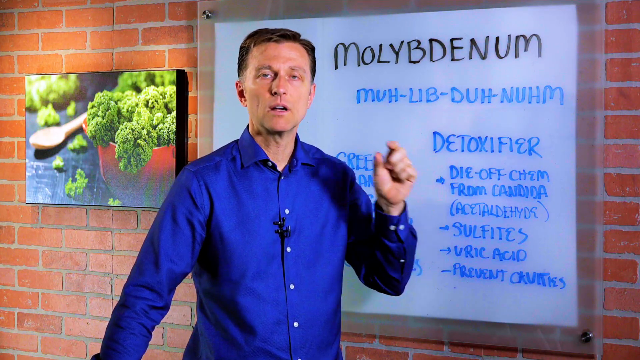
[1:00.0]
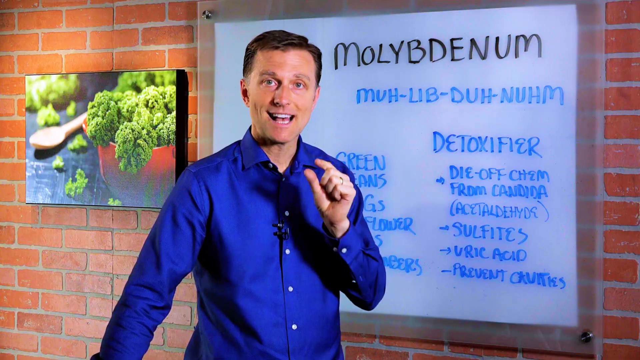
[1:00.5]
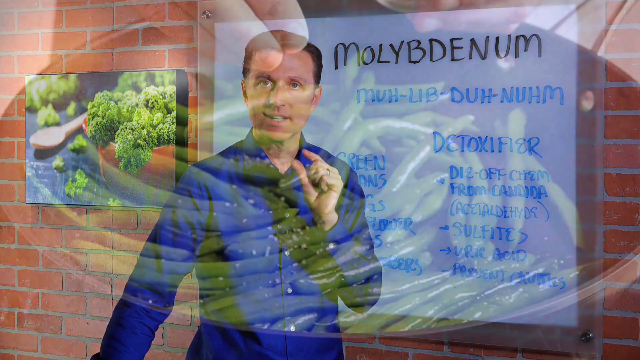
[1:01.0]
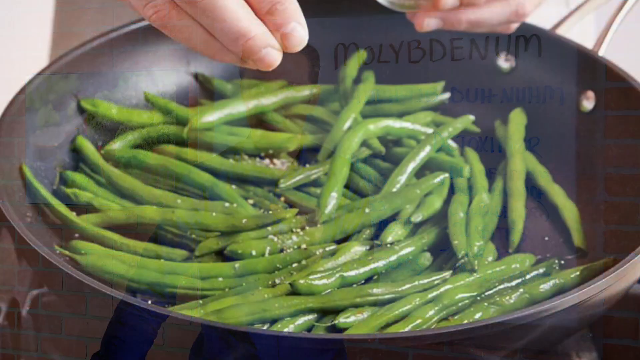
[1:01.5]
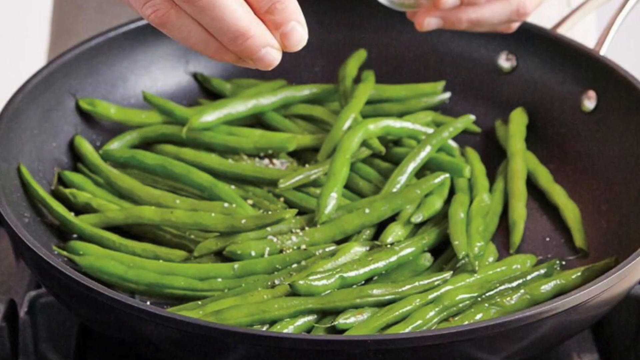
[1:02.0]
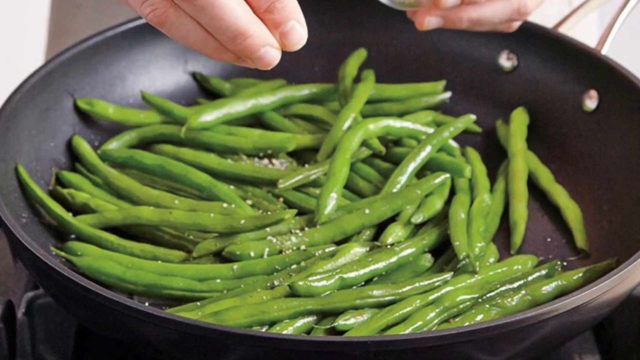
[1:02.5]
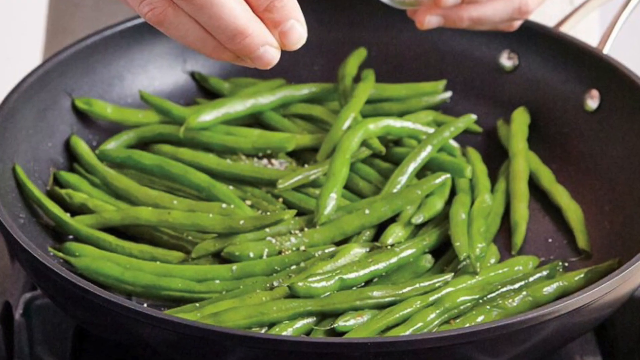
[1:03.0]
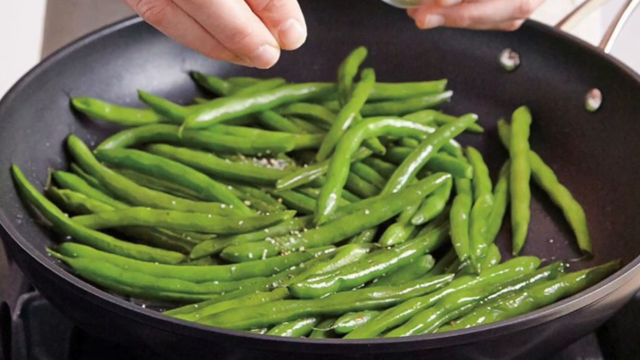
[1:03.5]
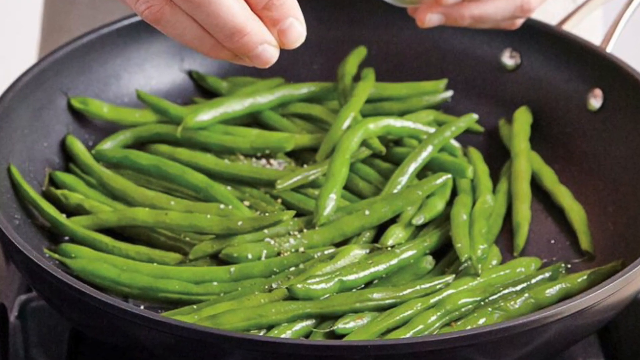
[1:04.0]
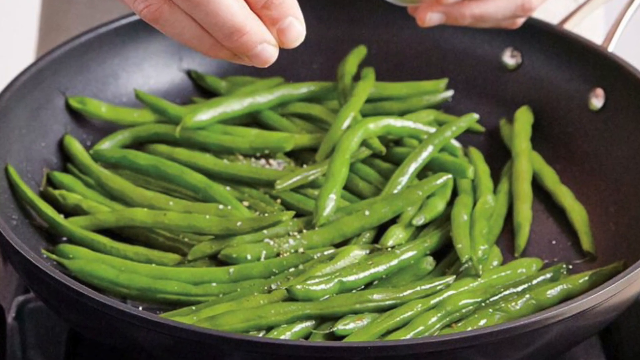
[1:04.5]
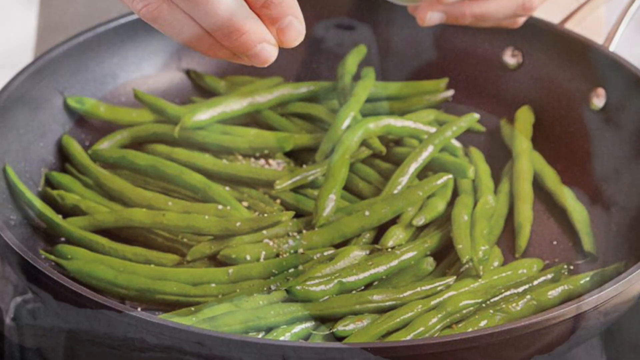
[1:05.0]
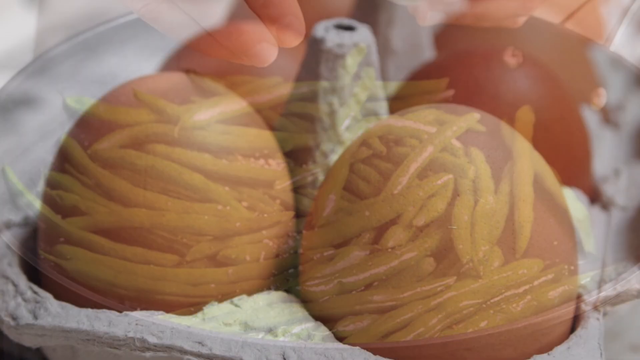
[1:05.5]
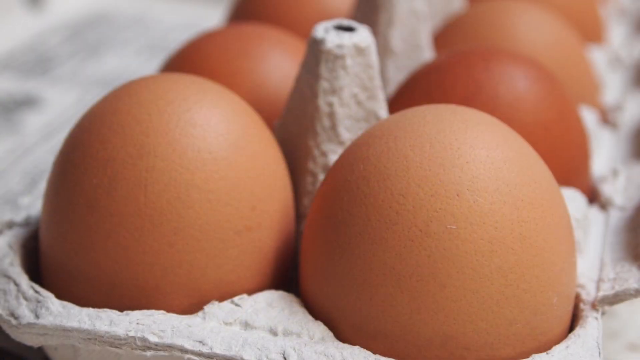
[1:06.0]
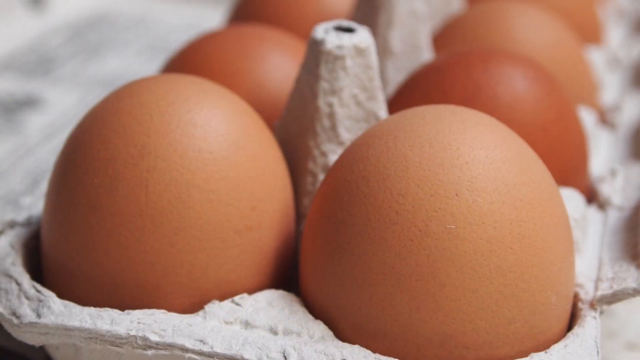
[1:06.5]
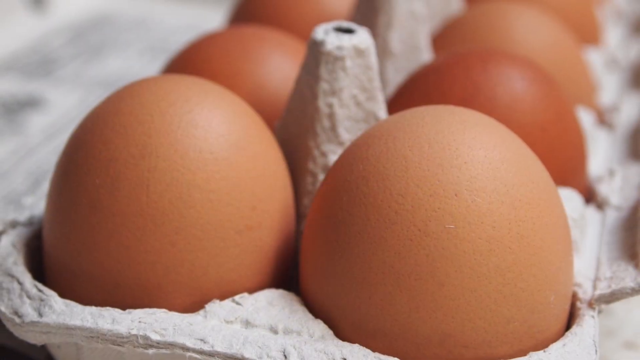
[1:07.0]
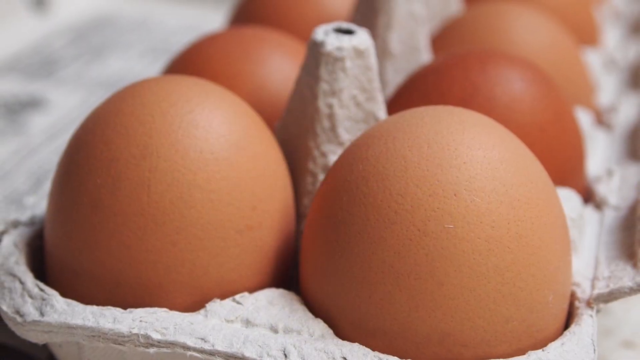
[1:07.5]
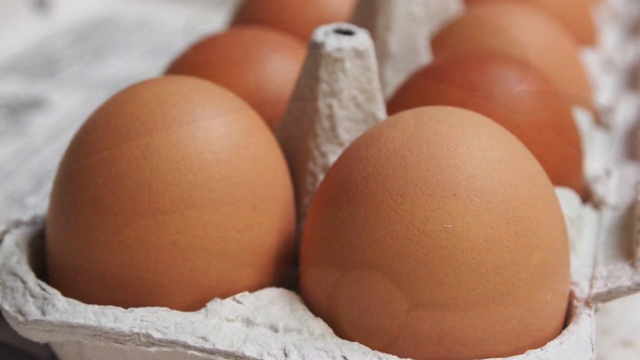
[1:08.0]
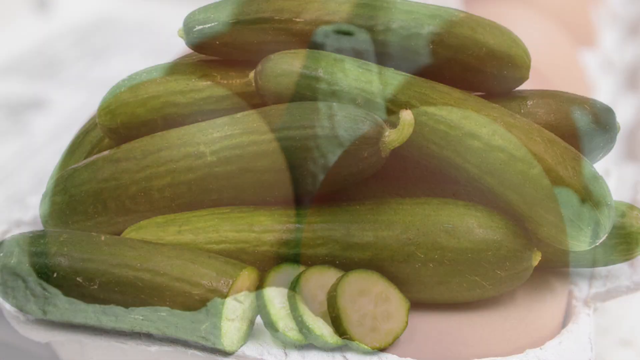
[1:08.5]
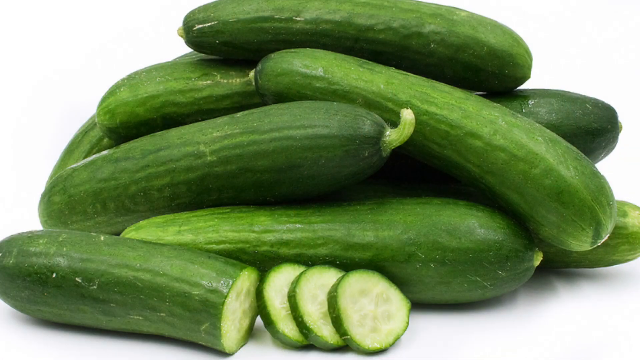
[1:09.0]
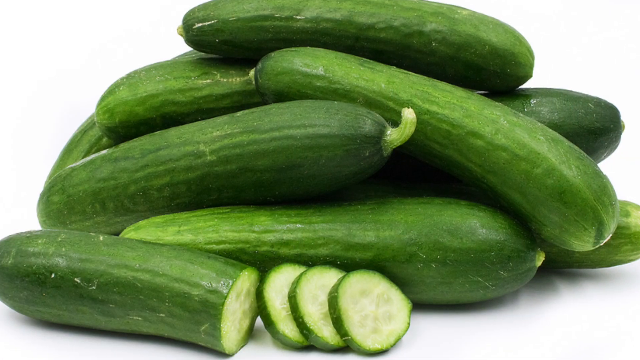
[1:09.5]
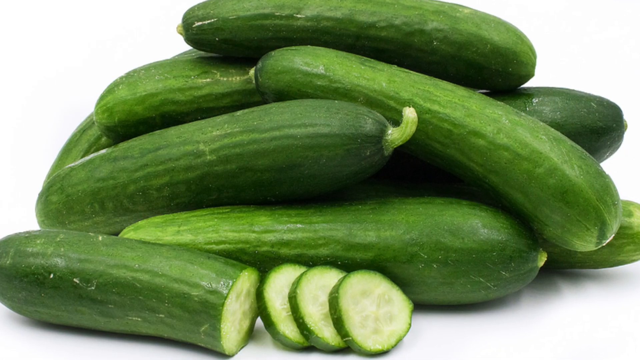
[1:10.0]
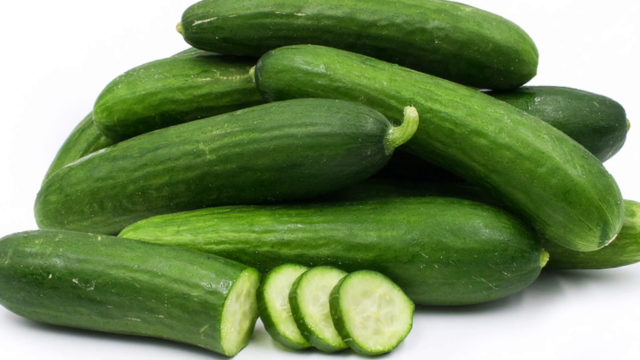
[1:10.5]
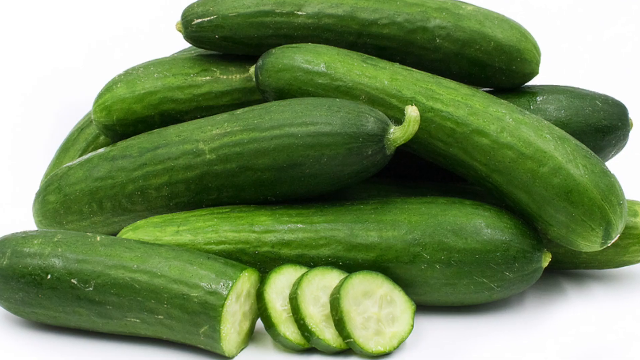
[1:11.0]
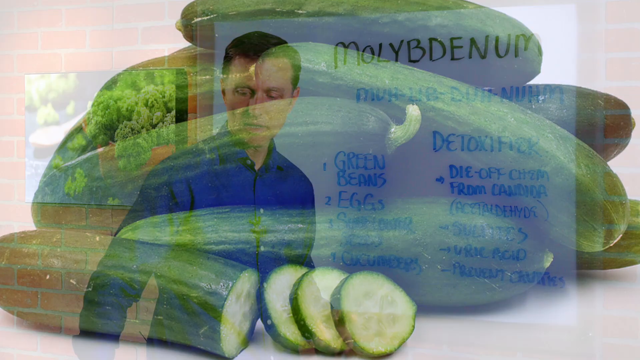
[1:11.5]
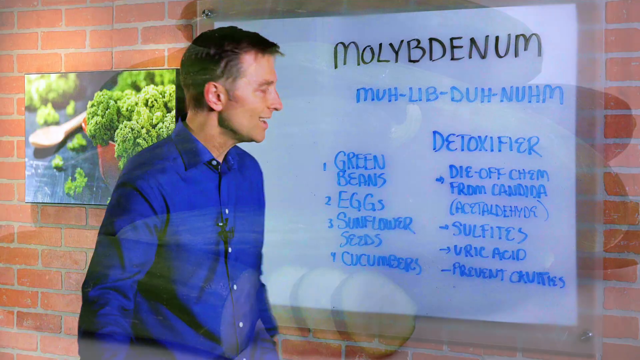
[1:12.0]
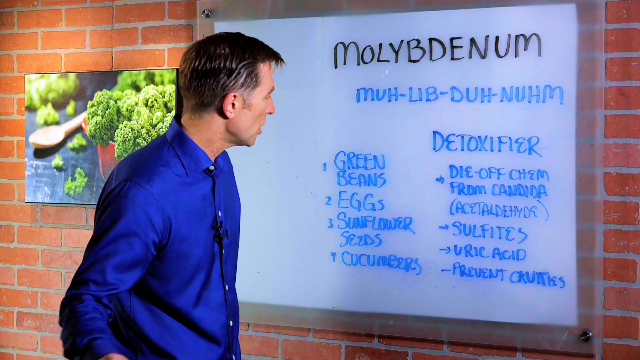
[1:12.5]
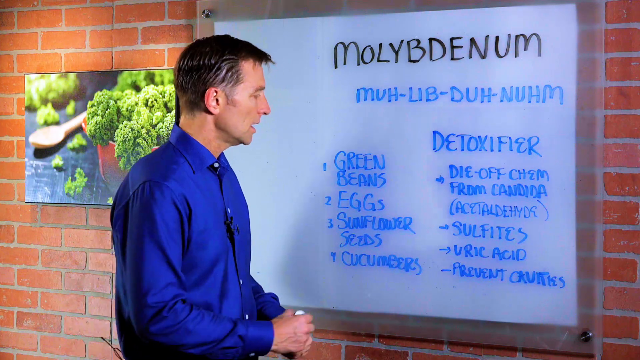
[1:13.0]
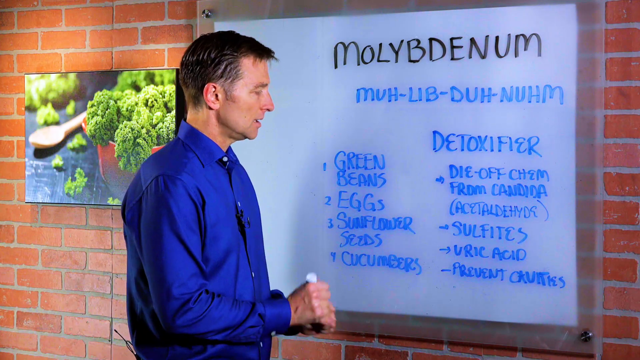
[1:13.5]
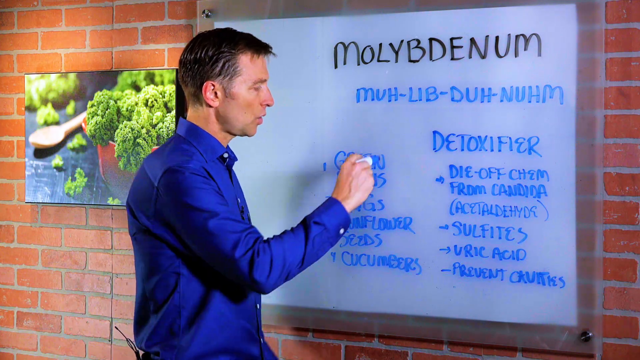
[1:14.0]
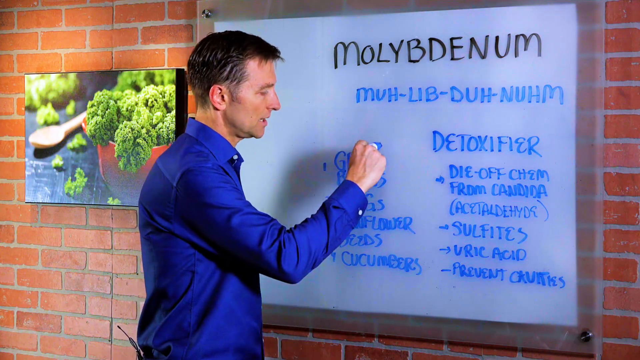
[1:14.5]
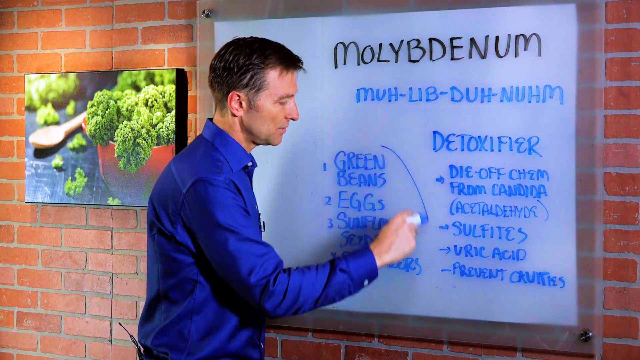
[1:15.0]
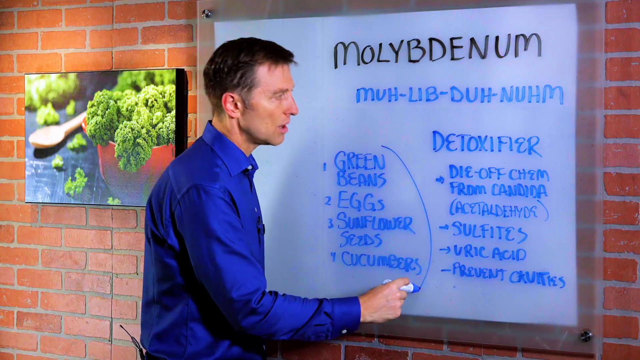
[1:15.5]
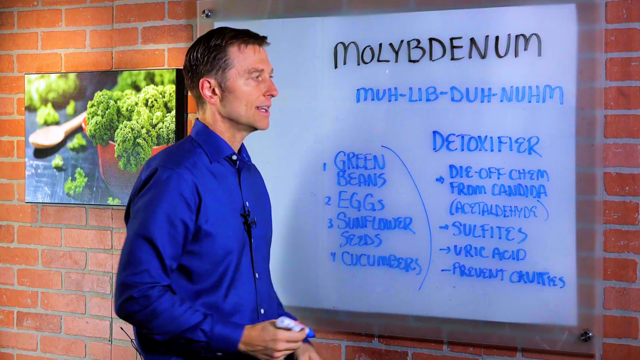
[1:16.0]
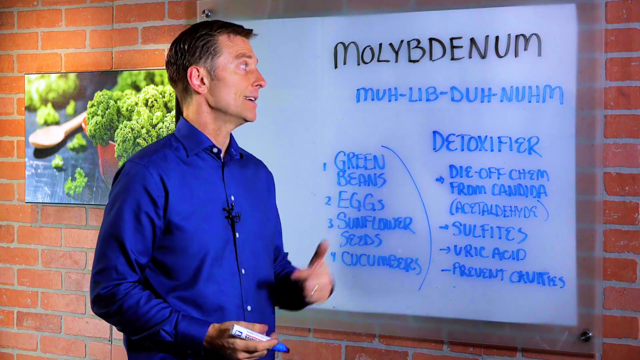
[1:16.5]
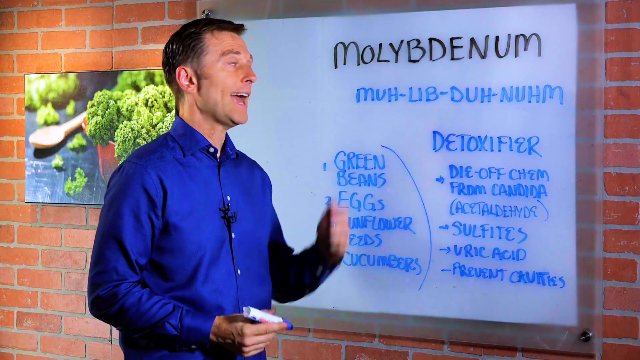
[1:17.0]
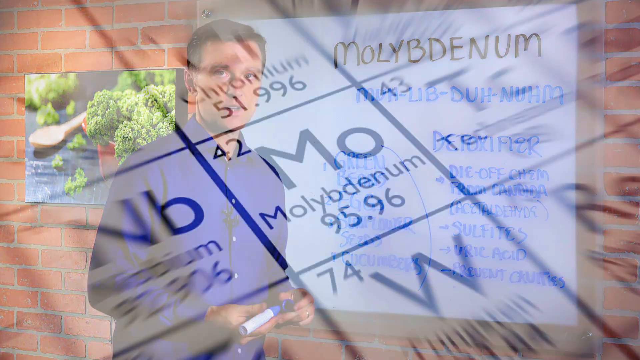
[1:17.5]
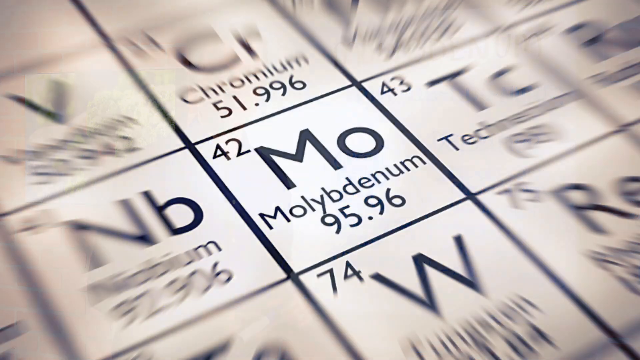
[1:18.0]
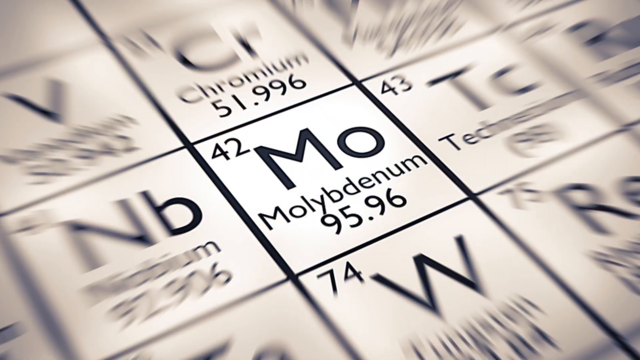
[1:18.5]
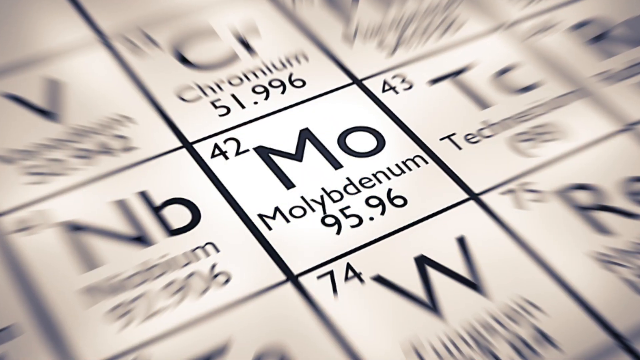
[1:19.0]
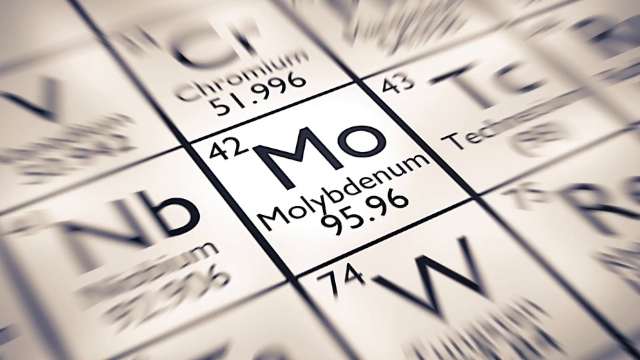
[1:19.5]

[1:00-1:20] The male makes a pinching gesture with about one or two centimetres between his finger and thumb, and the video fades to a new picture: a photo of green beans being cooked in a pan. Two hands, cropped off at the top of the screen, sprinkle salt, and there are particles of salt or other condiments on top of the green beans. The beans are shiny and coated in oil. The picture zooms in slowly. Next is a picture of eggs inside a cardboard carton, in two columns or four rows, with two large eggs in the foreground and smaller and smaller eggs going into the background. Then comes a photo of what looks like cucumbers: about 10 quite short cucumbers in a pile. At the bottom one cucumber is cut into three thin slices, which are next to the rest of the cucumber in the centre bottom of the screen. The video returns to the male, who now holds a blue whiteboard marker in his right hand with his elbow at 90 degrees. Looking at the whiteboard, he draws a curved line dividing the two columns, then moves his left thumb upwards and points his index finger upwards. He is still looking to the left-hand side, then turns his head to face the camera.